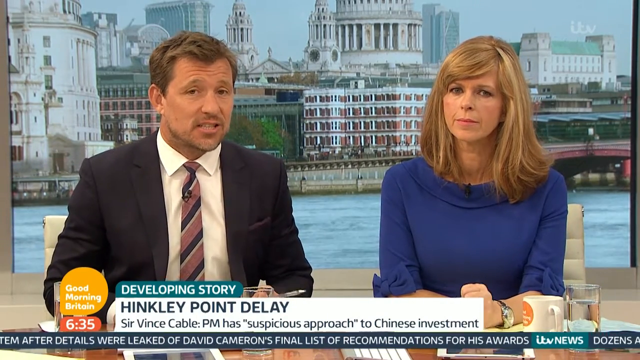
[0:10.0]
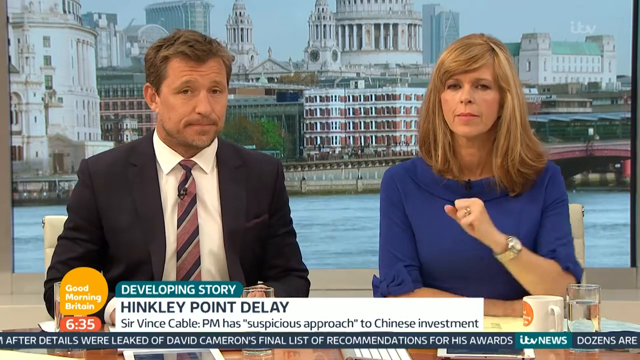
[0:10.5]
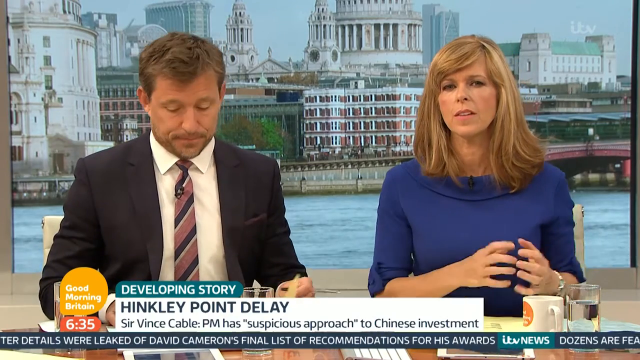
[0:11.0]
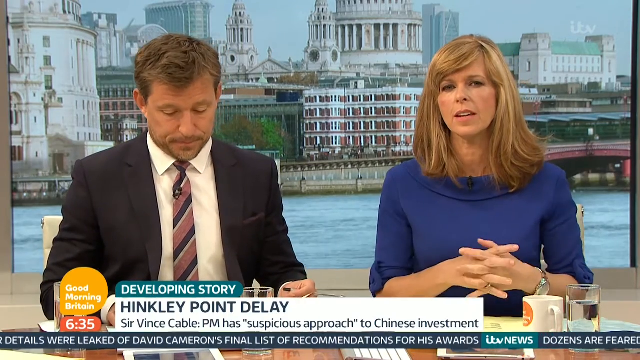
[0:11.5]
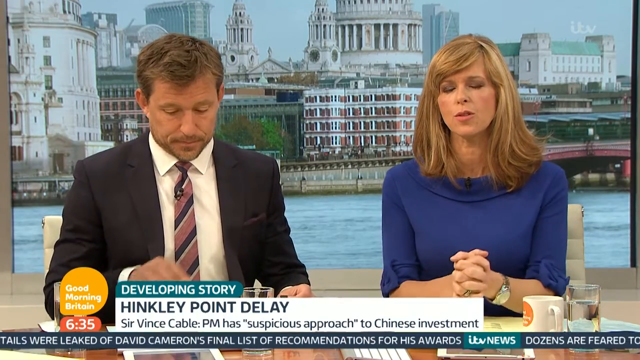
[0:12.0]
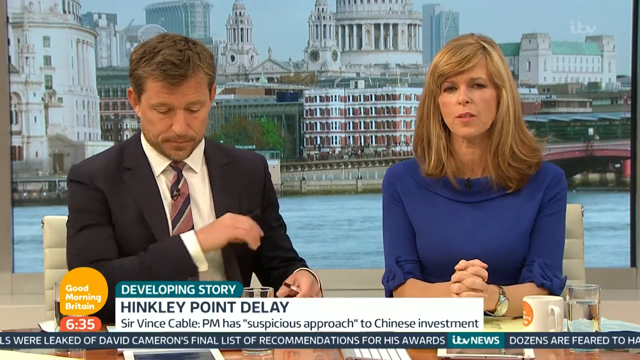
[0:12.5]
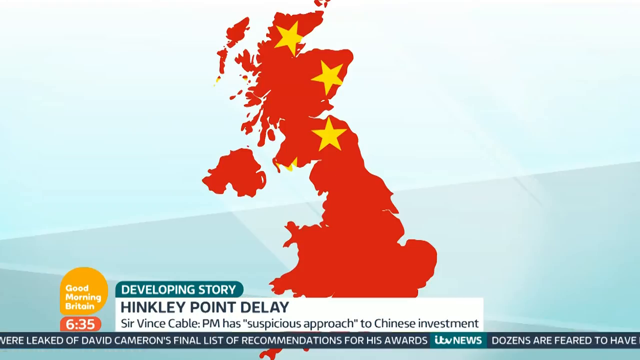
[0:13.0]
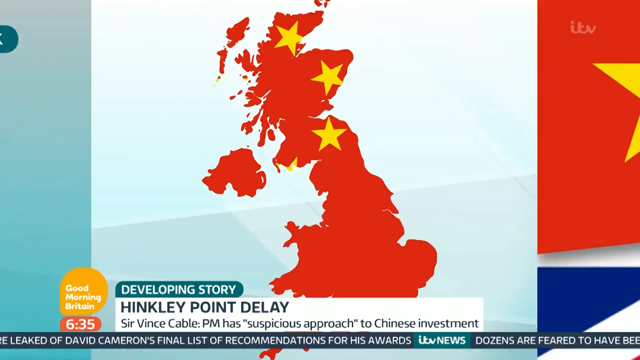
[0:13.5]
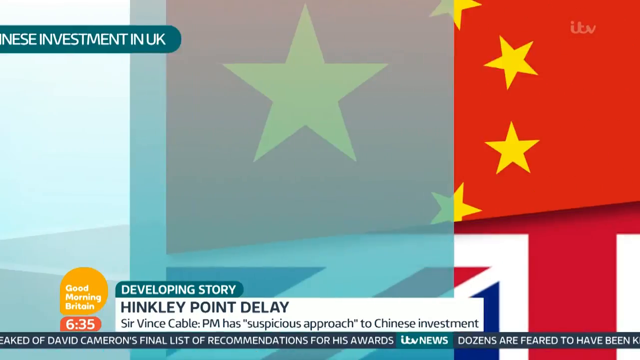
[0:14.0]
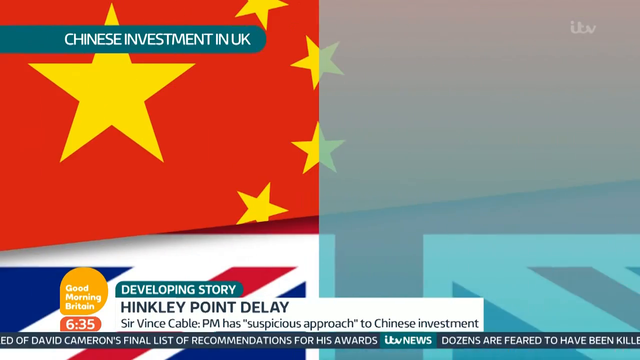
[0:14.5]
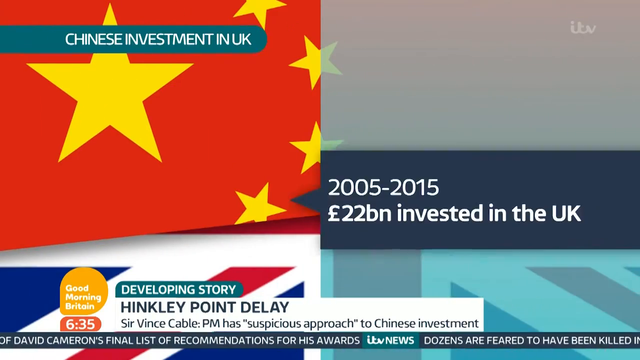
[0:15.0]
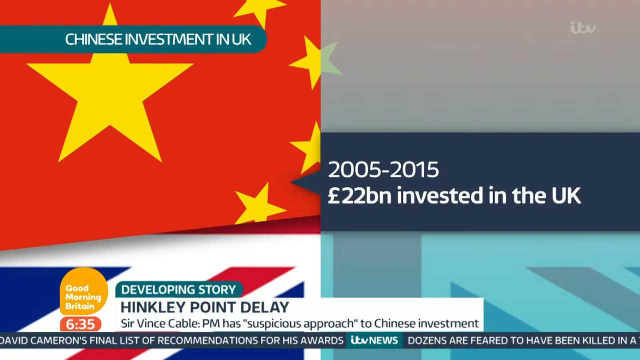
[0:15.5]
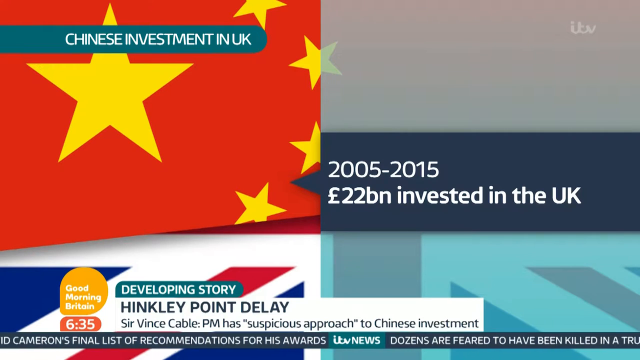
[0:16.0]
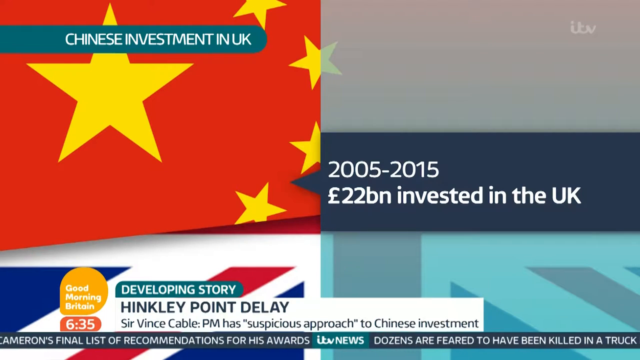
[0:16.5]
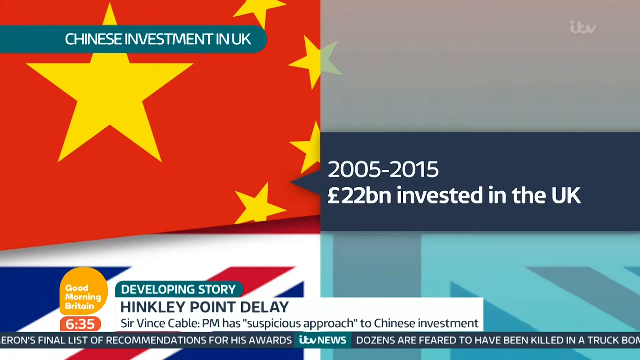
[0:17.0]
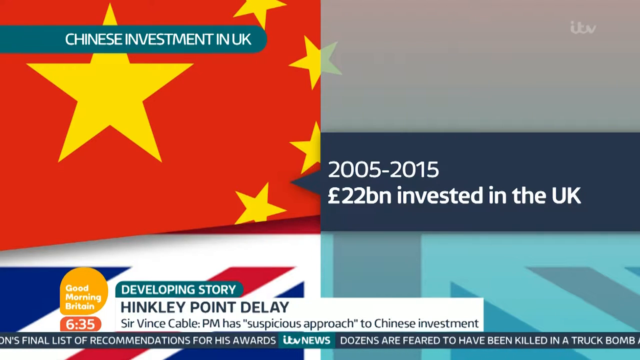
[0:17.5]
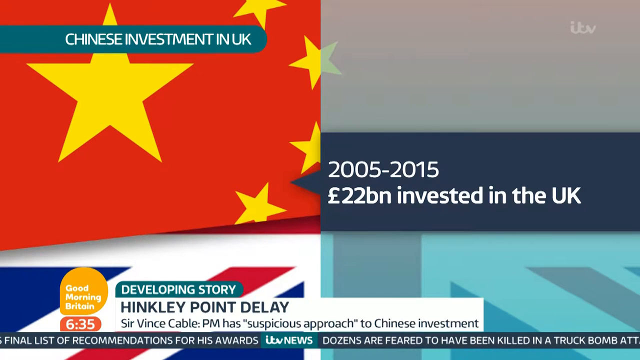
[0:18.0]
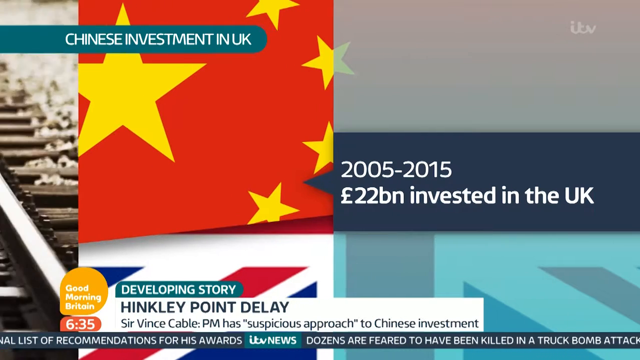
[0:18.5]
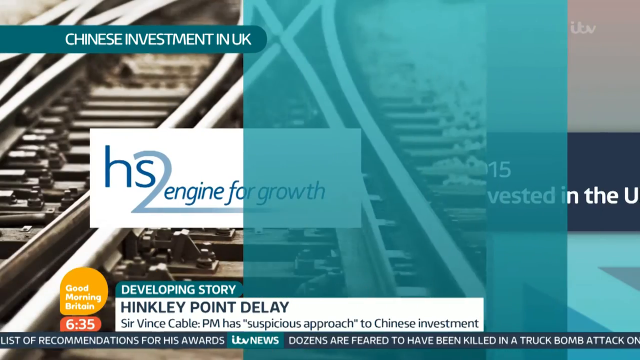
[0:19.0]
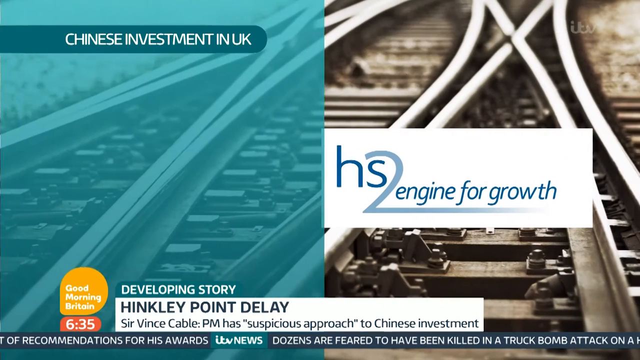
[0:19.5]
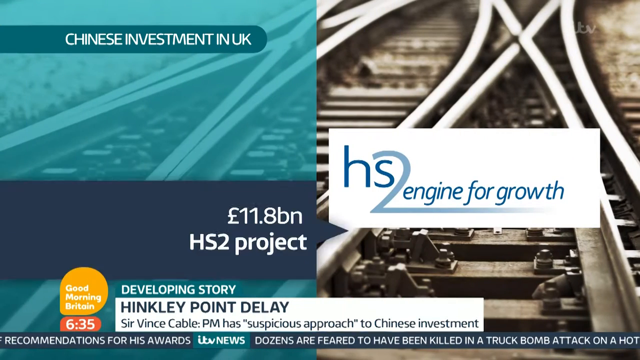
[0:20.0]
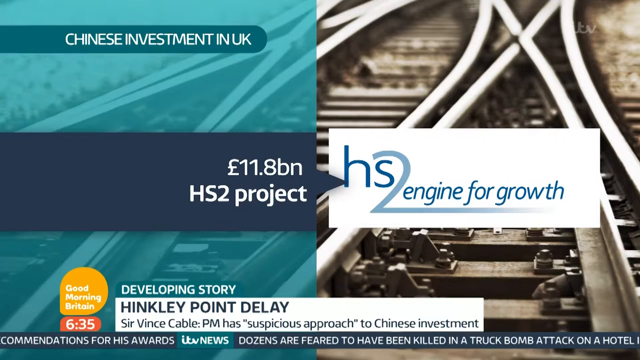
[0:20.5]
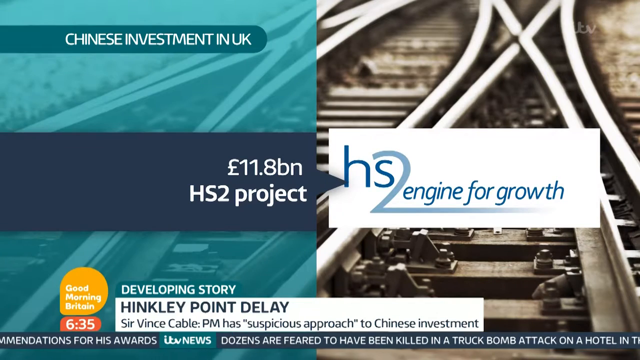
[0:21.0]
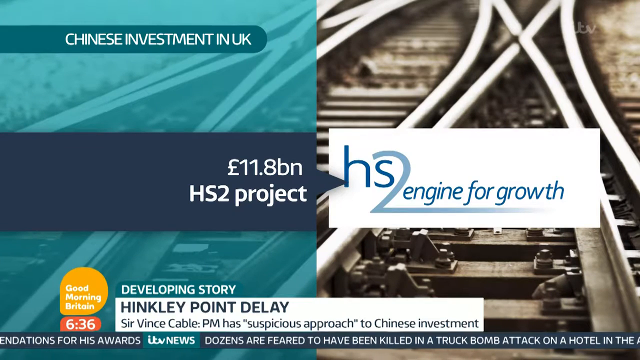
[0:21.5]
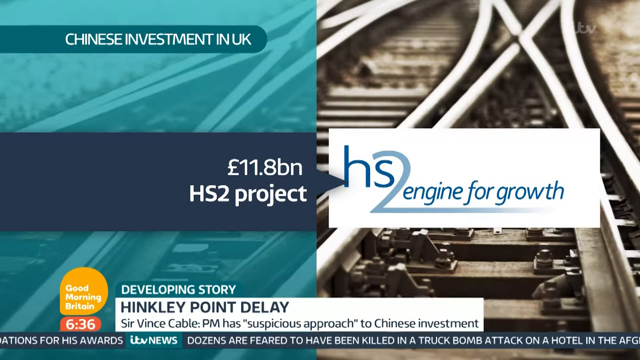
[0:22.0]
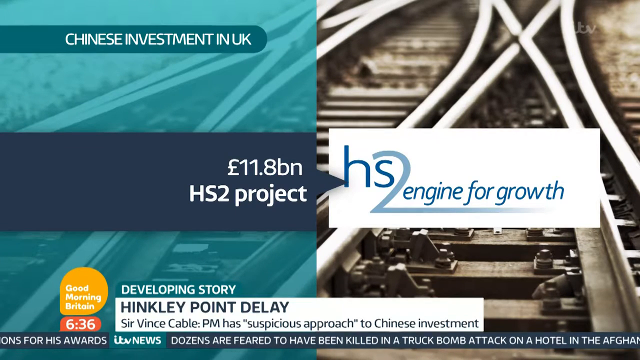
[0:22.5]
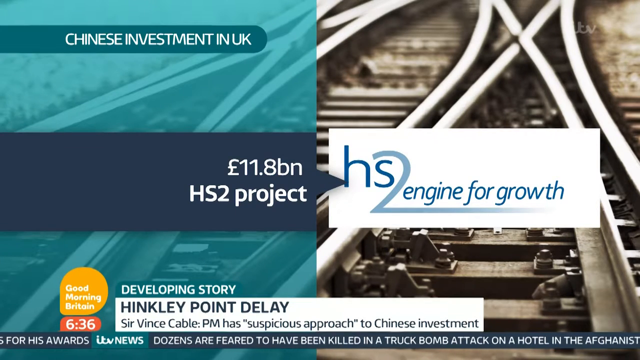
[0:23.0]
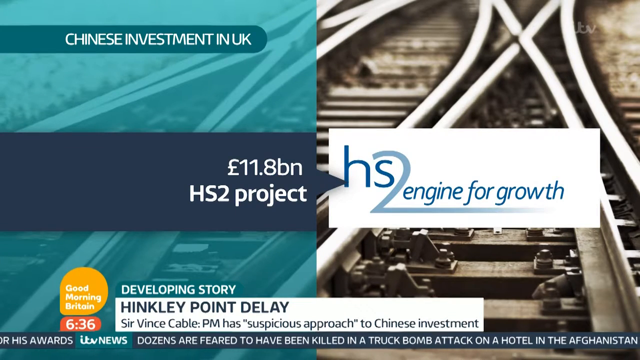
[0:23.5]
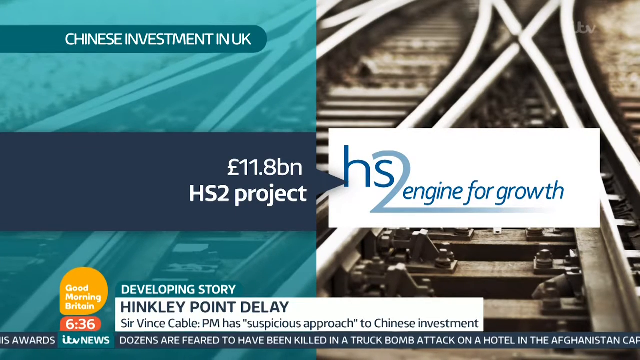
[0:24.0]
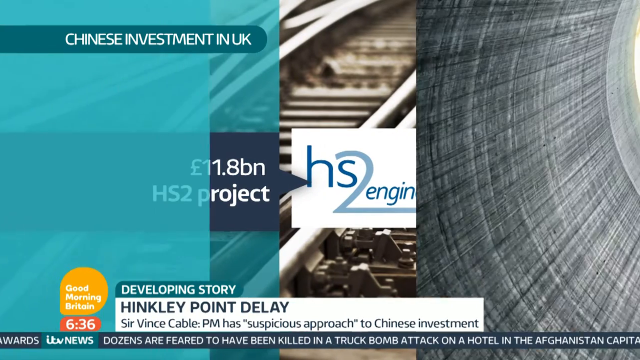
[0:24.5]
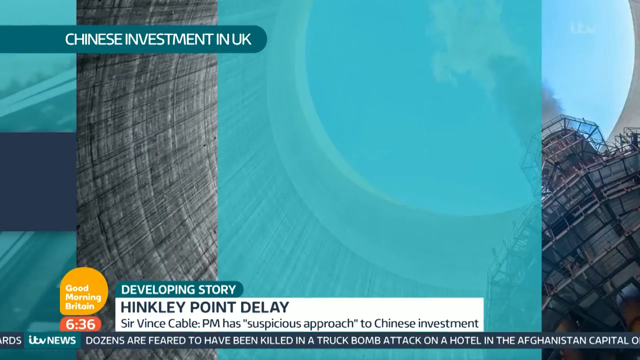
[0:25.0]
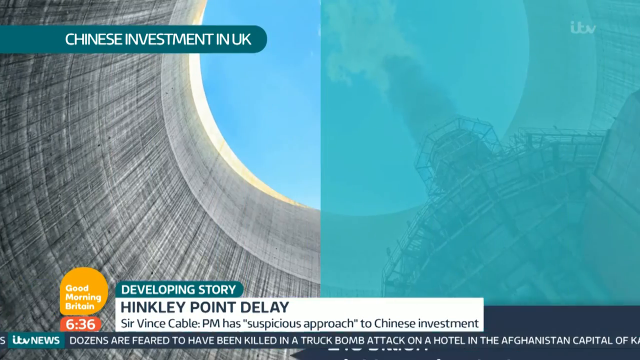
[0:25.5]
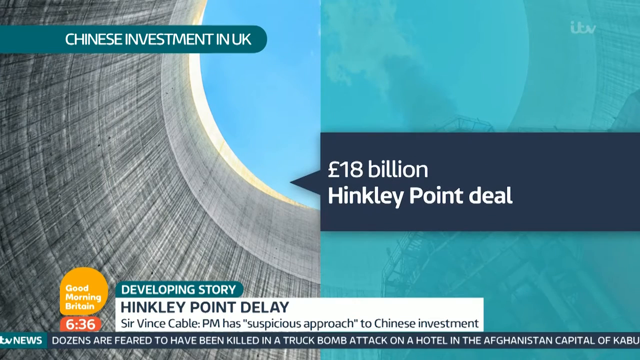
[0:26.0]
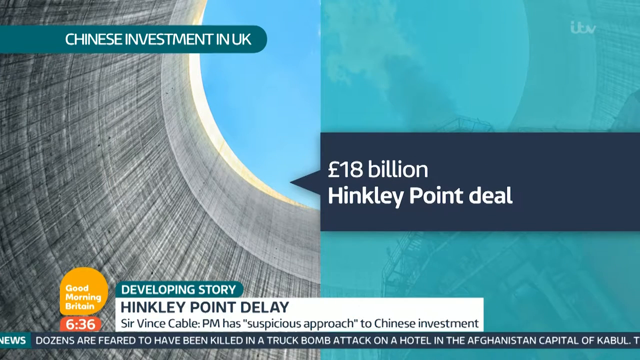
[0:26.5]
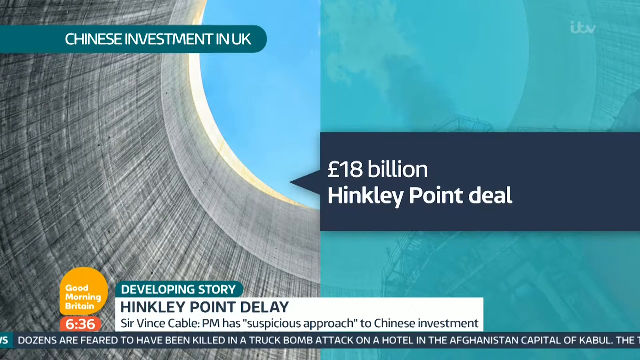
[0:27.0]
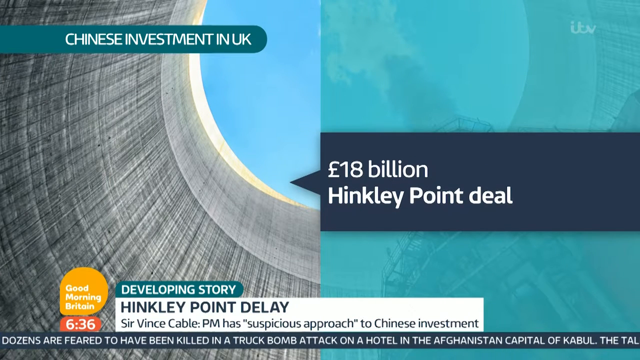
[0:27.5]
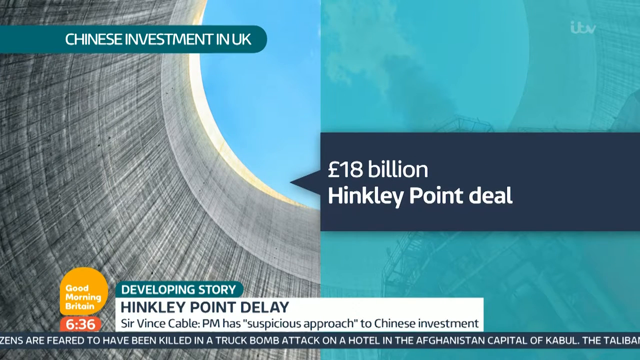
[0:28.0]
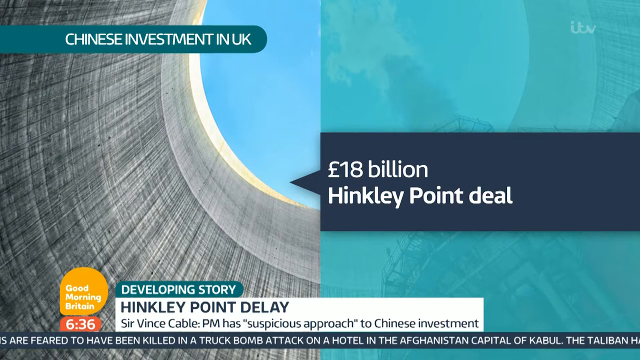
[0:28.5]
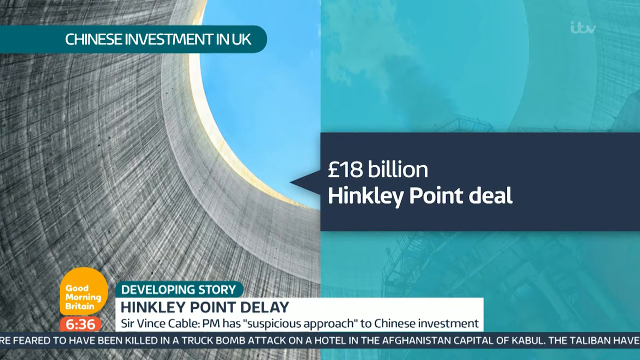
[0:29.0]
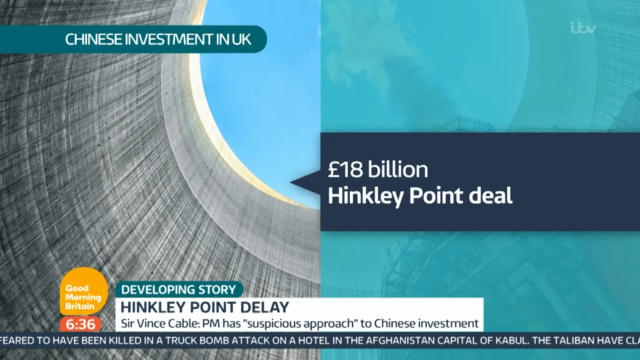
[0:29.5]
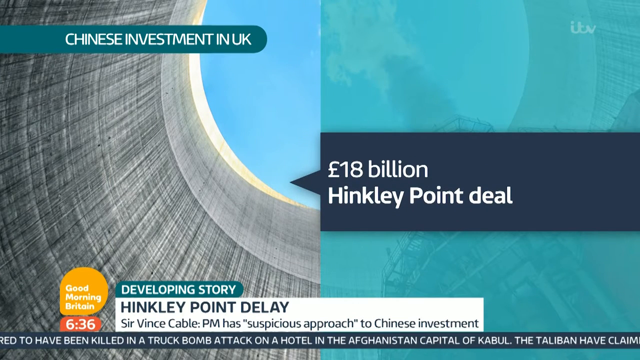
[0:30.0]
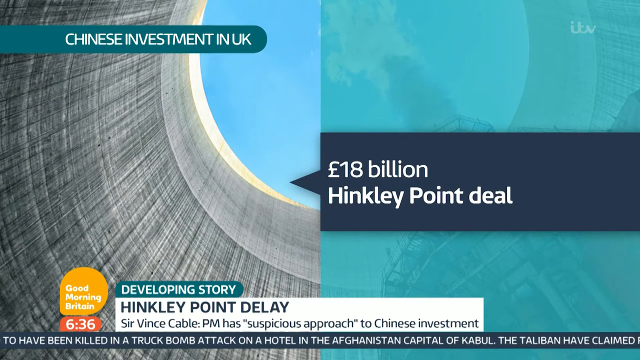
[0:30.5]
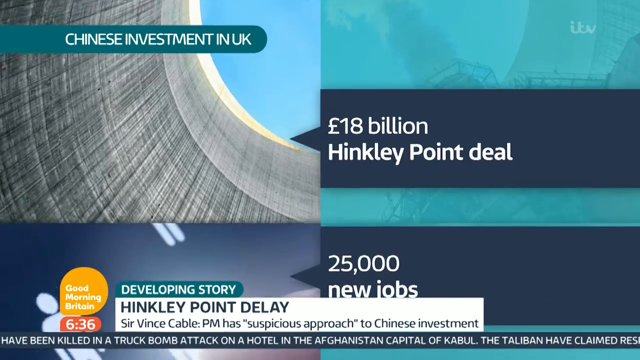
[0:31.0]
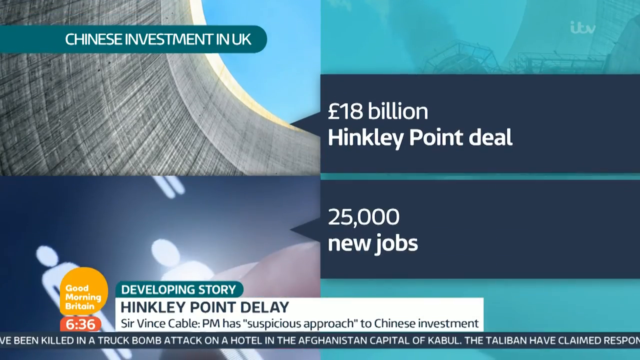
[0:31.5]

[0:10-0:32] The presenter with shoulder-length blonde hair and a blue top talks to the camera about Chinese investment in the UK and the developing story about the Hinkley Point delay. The male presenter then continues with the story while the woman in the blue top looks on, before she takes her turn to report again. A caption comes up again showing the investments in the UK.